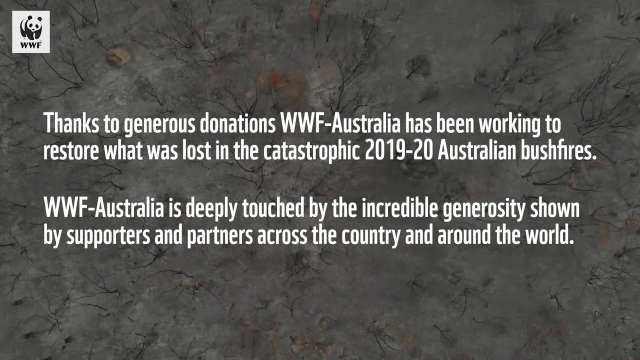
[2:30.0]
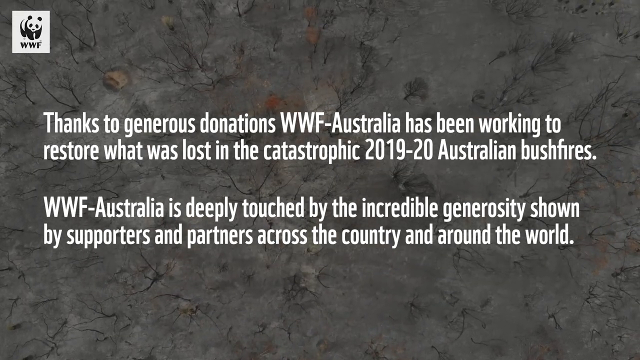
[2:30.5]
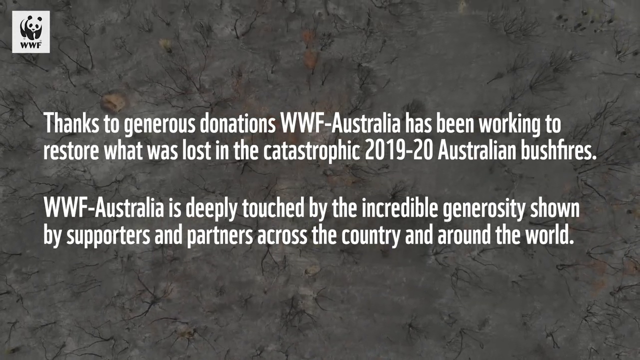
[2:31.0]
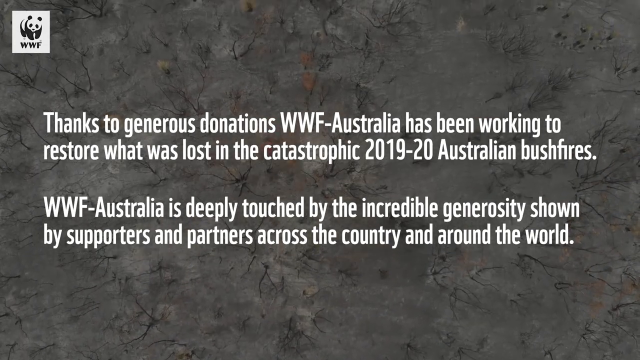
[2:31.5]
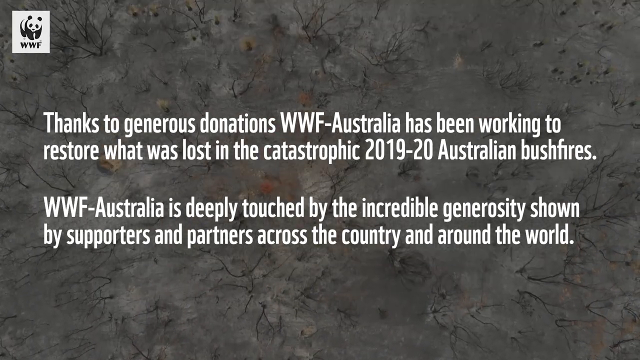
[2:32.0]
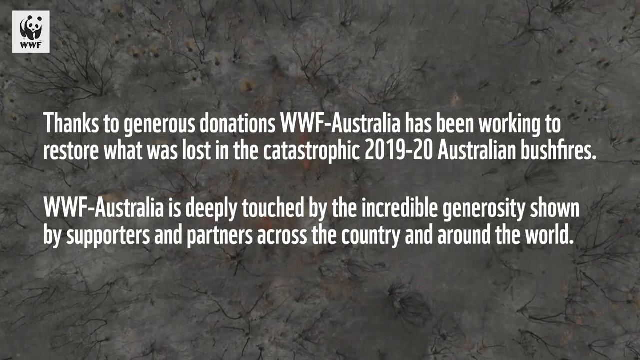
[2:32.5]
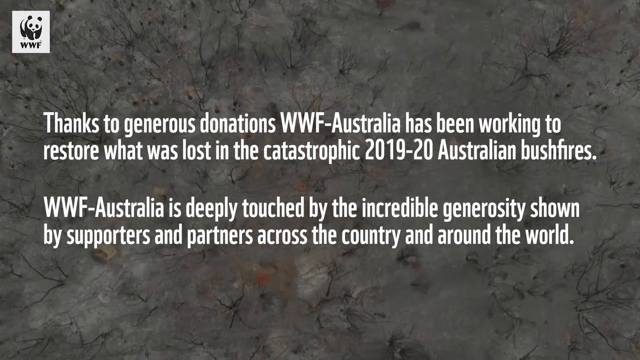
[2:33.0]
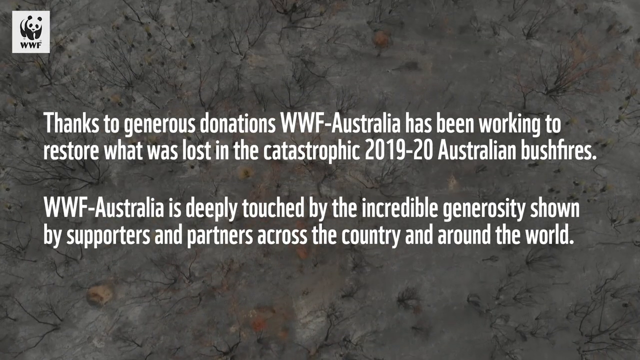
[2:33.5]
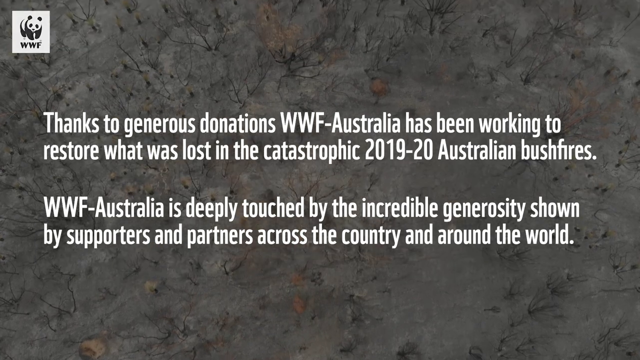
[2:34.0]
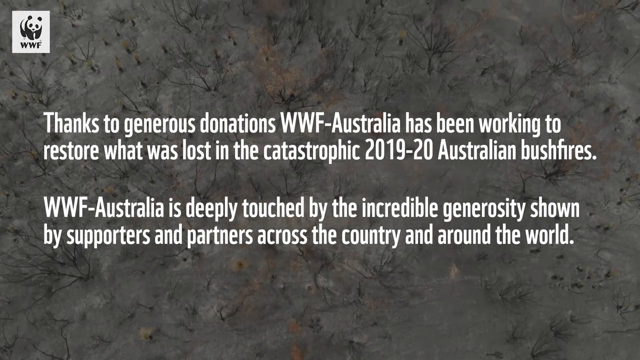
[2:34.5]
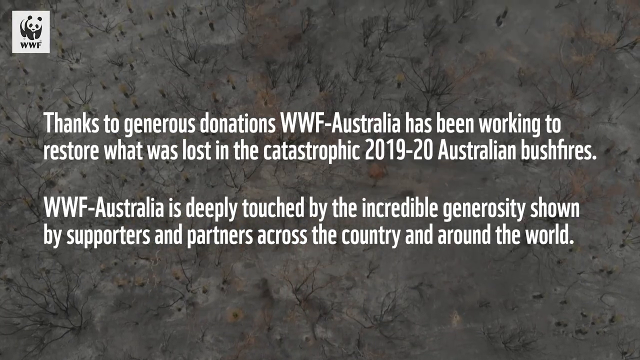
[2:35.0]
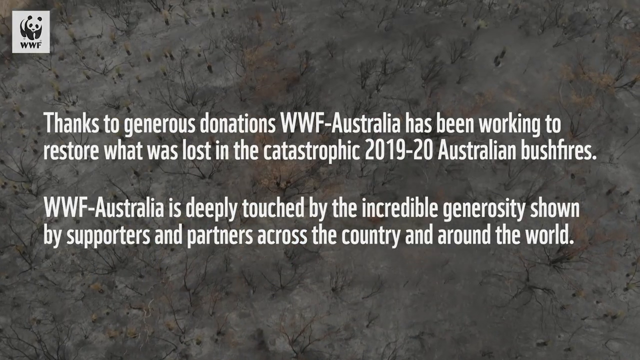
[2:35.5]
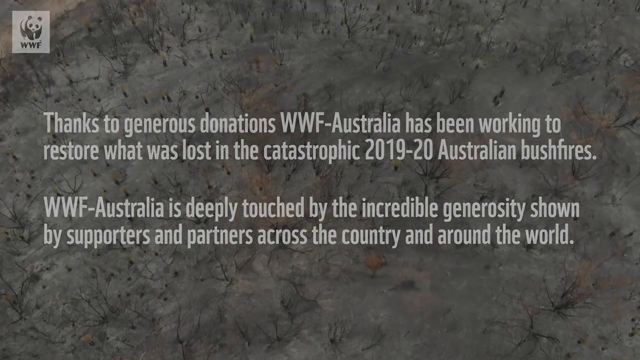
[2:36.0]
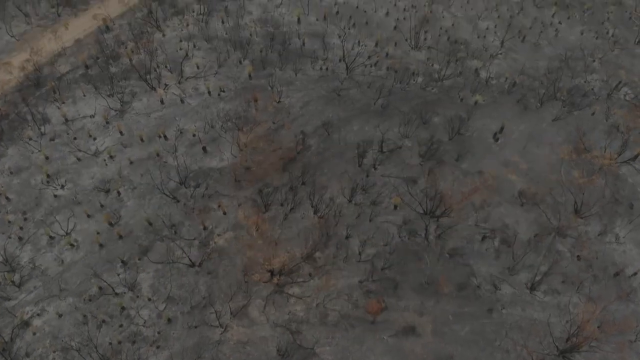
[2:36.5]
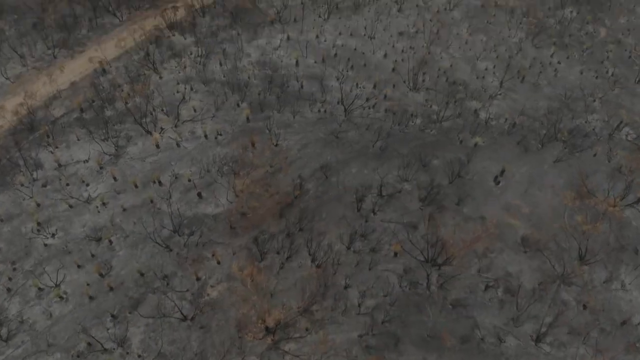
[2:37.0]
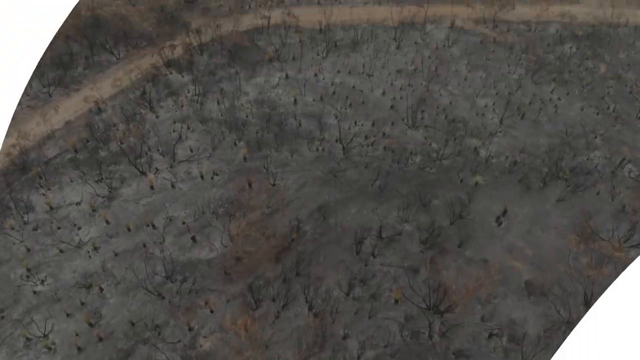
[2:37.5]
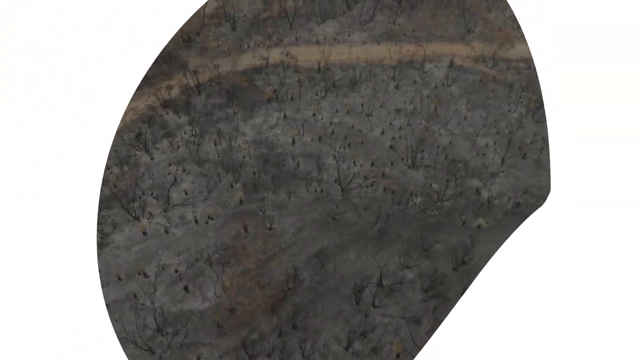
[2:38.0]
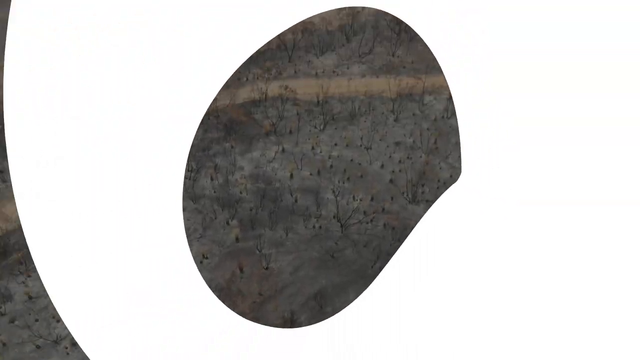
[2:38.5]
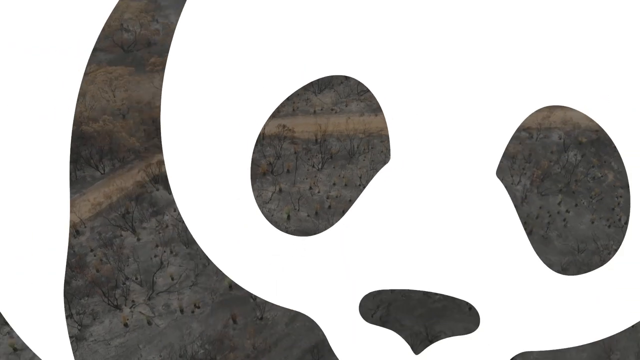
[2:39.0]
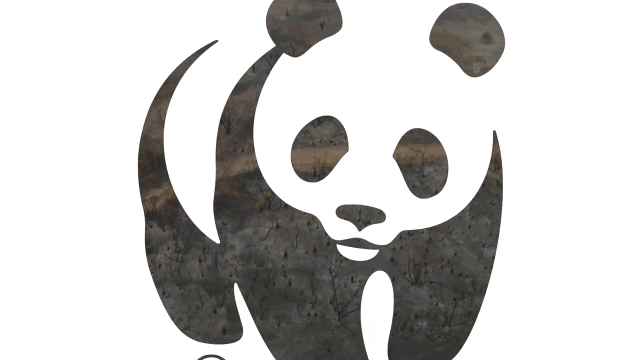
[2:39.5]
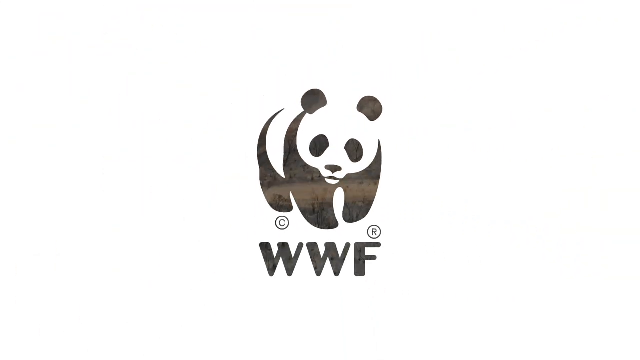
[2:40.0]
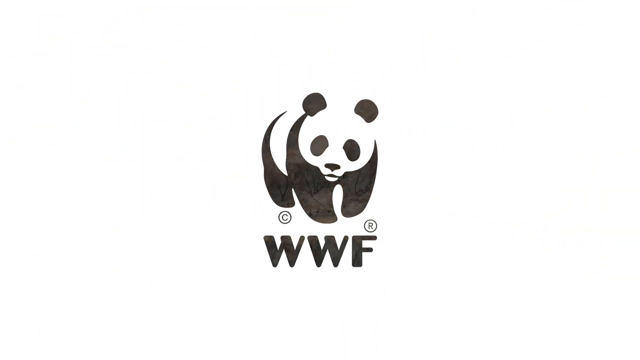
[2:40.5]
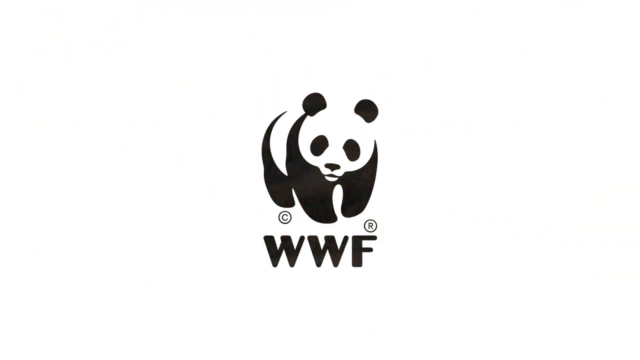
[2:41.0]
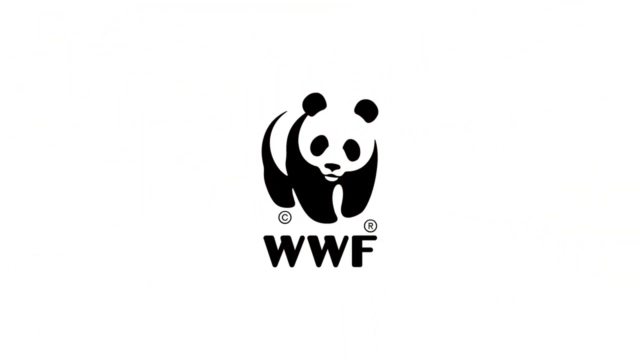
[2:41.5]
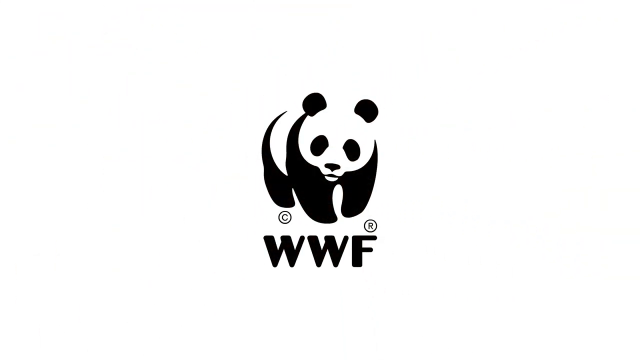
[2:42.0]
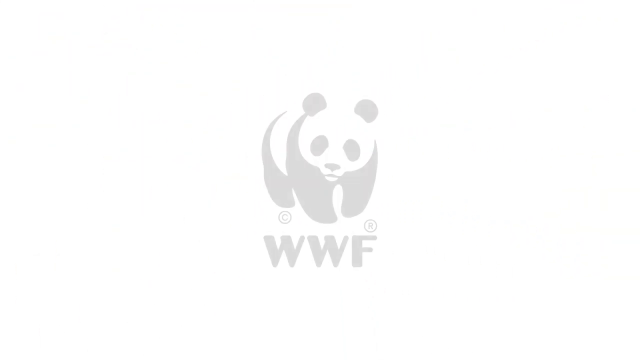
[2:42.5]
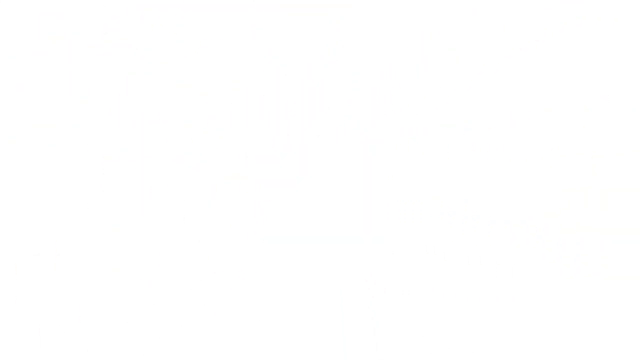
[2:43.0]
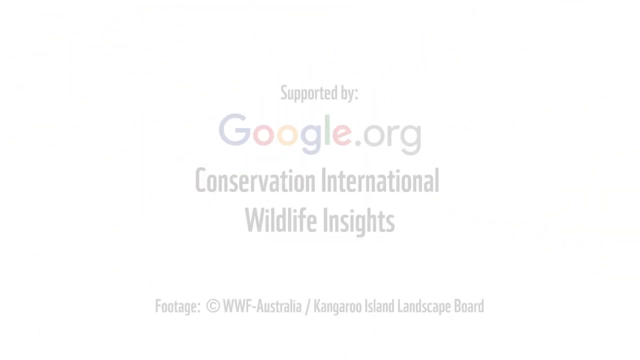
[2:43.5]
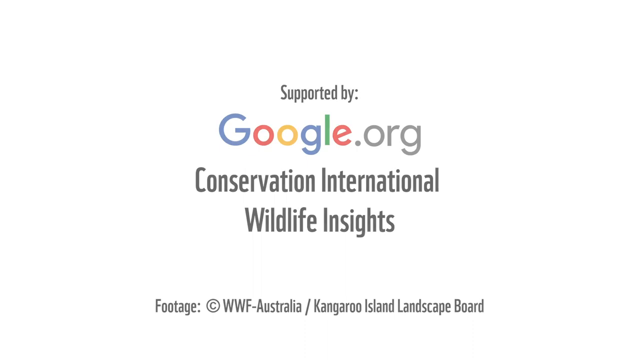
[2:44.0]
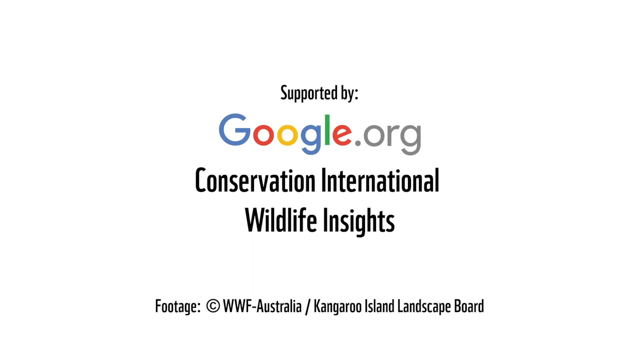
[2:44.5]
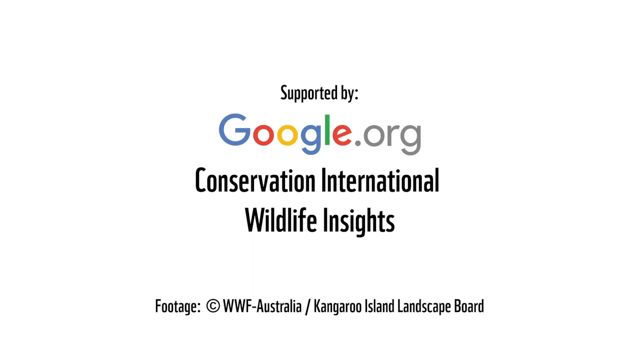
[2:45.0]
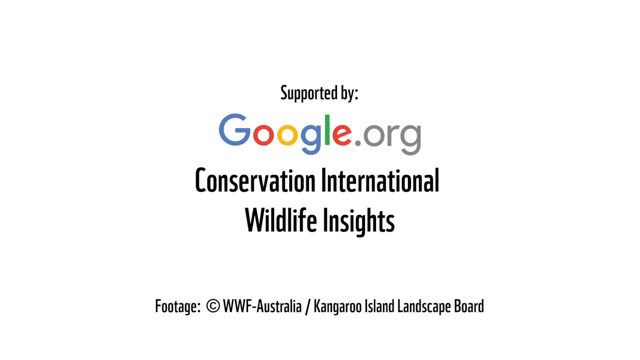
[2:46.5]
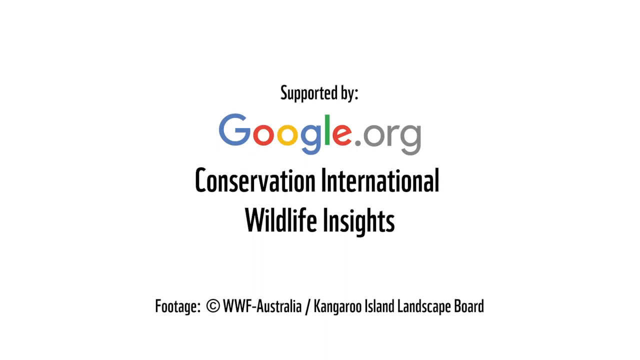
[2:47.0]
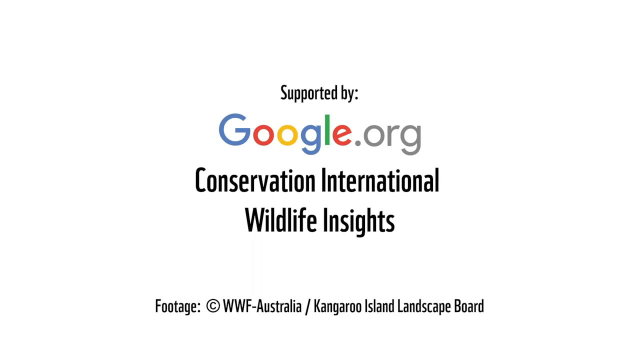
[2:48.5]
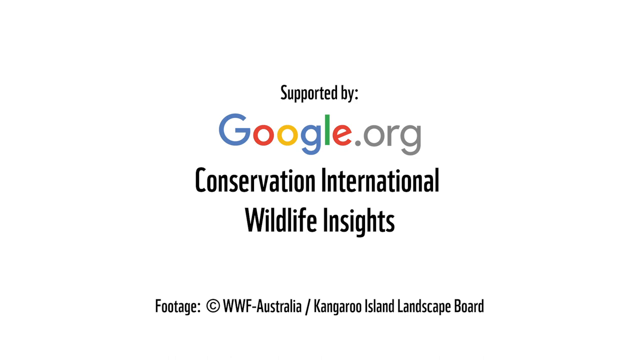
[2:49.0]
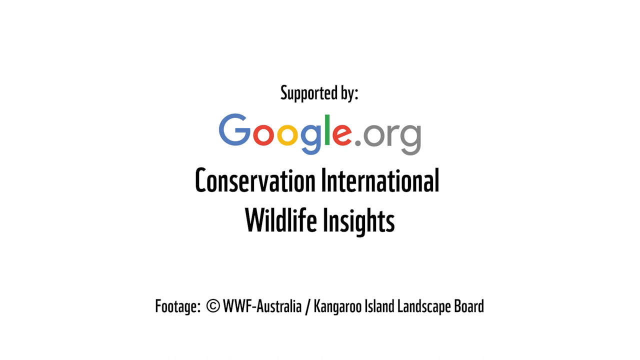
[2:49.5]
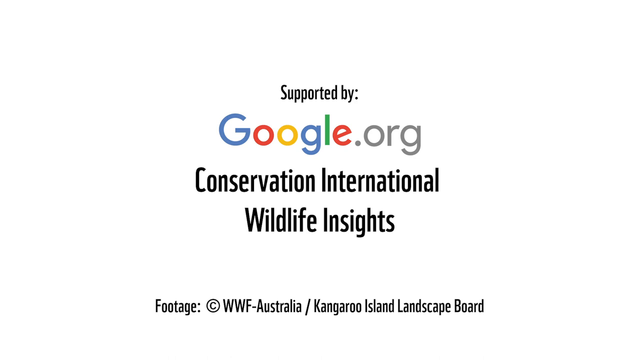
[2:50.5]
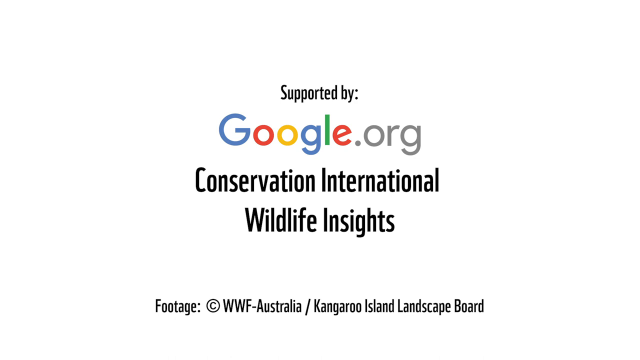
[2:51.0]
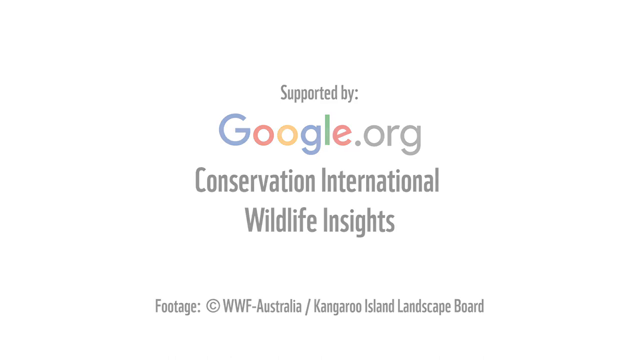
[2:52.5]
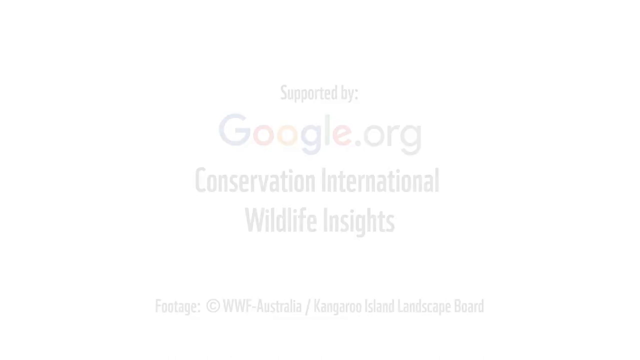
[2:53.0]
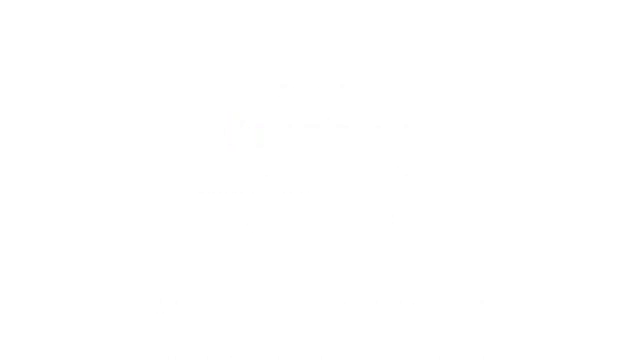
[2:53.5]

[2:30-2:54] The overhead view of the forest continues with the text in the foreground. The camera moves upward over the landscape below, steadily moving forward, and begins to pan up slightly to show a more angled view, continuing to pan up and lightly zoom while moving forward. The video then transitions to a large World Wildlife logo, starting from the left eye of the panda and zooming out, with the video still visible in the background through the black parts of the logo. It gradually zooms out and solidifies until the full logo is visible on a white background. The logo fades out and text fades in reading "supported by google.org, Conservation International Wildlife Insights", with legal information shown below. After a moment this fades out to just the white background.